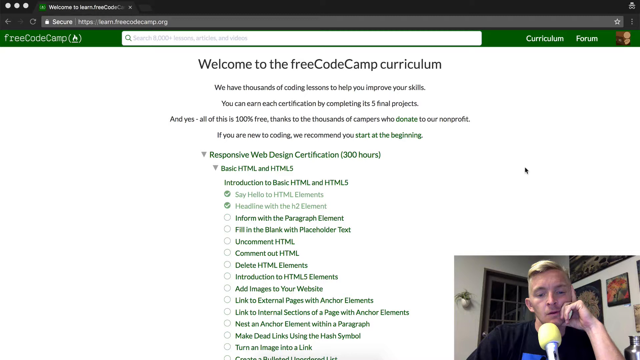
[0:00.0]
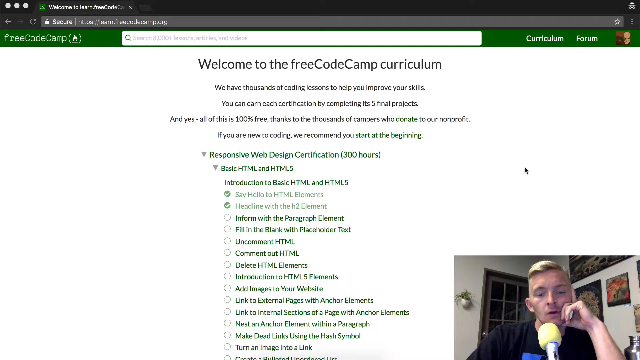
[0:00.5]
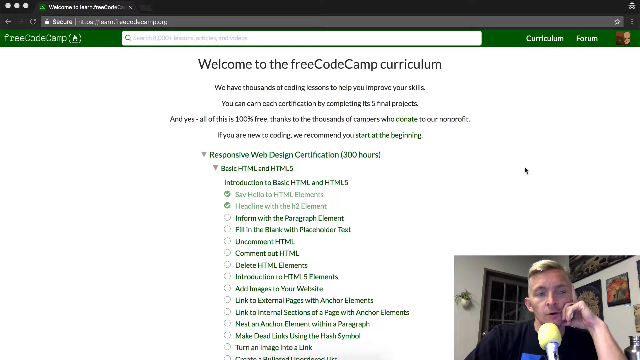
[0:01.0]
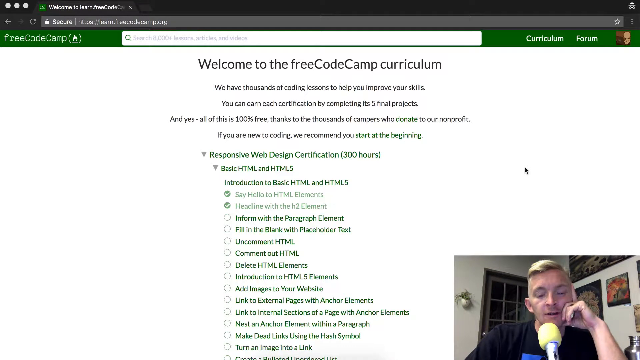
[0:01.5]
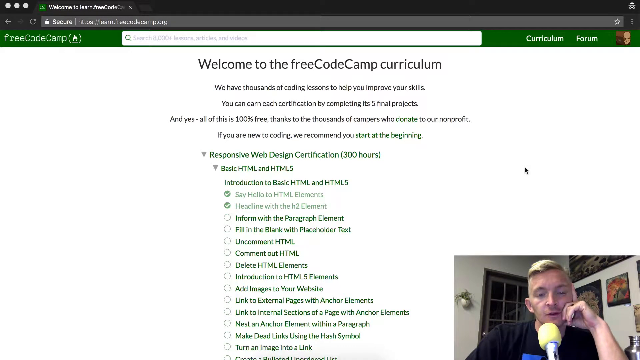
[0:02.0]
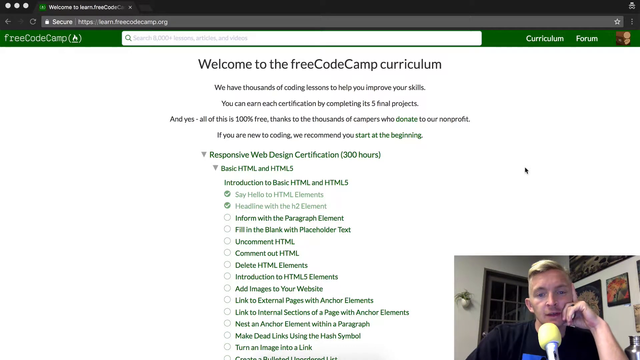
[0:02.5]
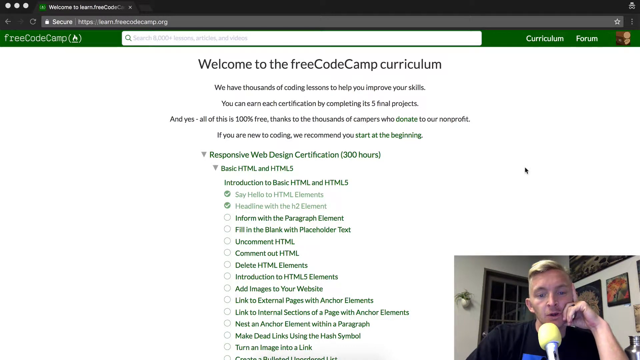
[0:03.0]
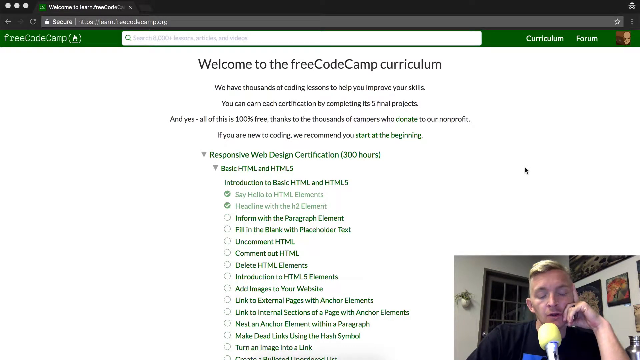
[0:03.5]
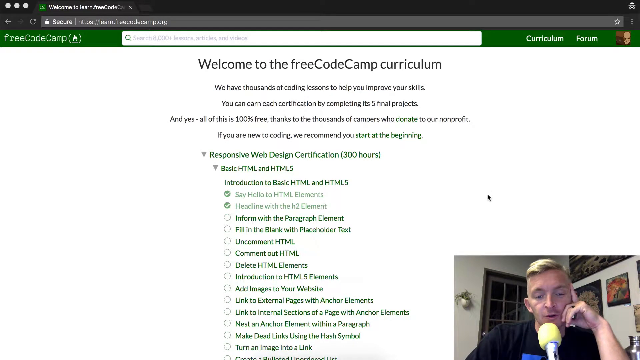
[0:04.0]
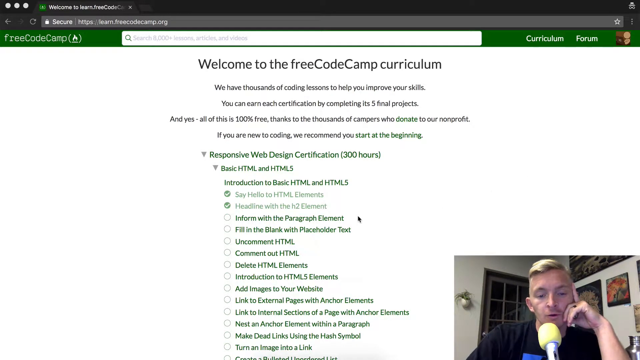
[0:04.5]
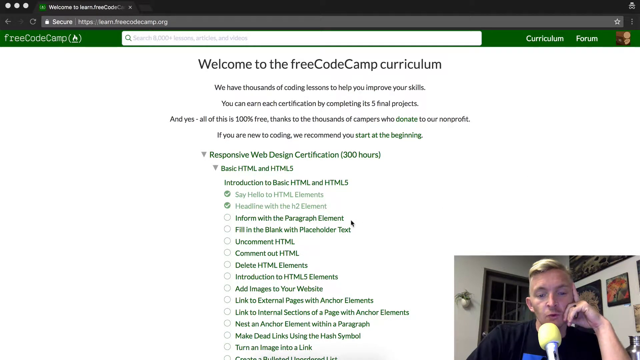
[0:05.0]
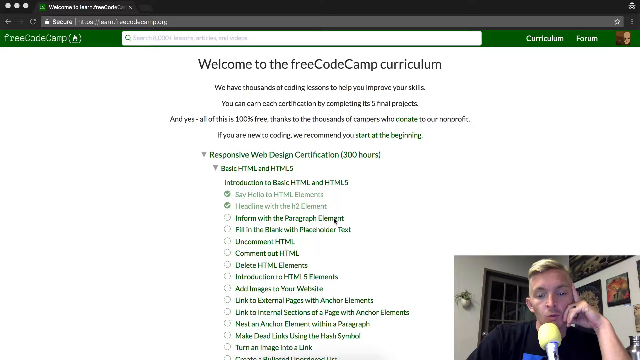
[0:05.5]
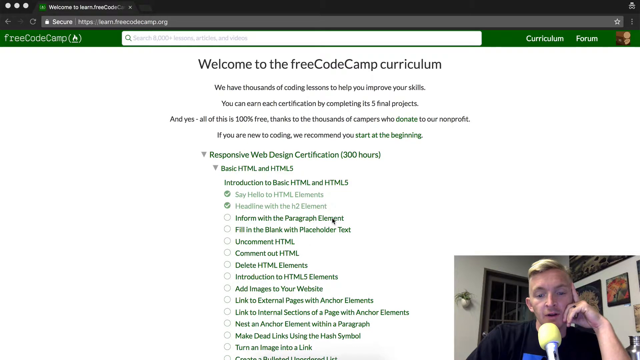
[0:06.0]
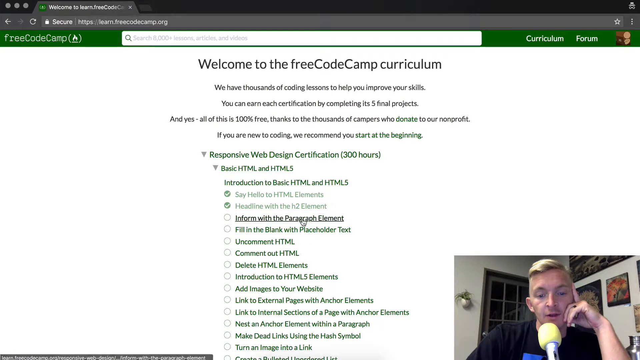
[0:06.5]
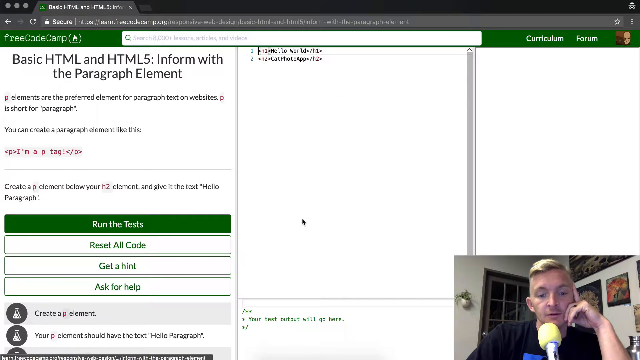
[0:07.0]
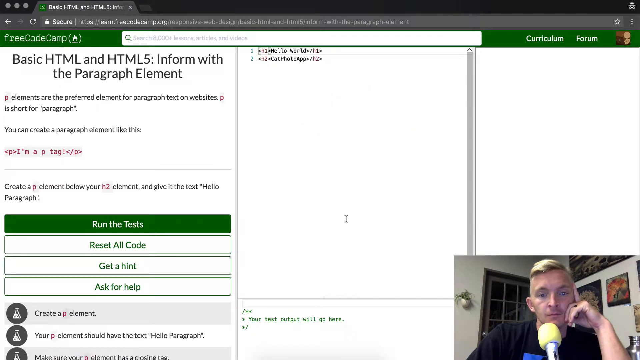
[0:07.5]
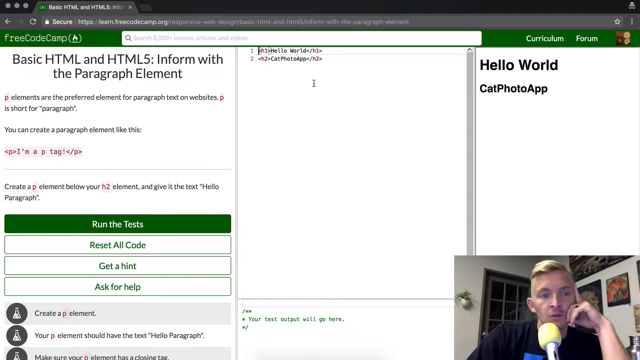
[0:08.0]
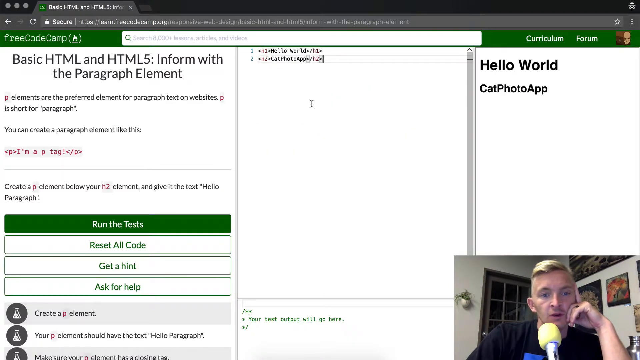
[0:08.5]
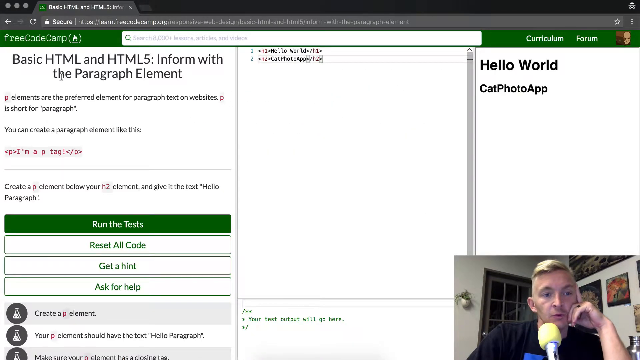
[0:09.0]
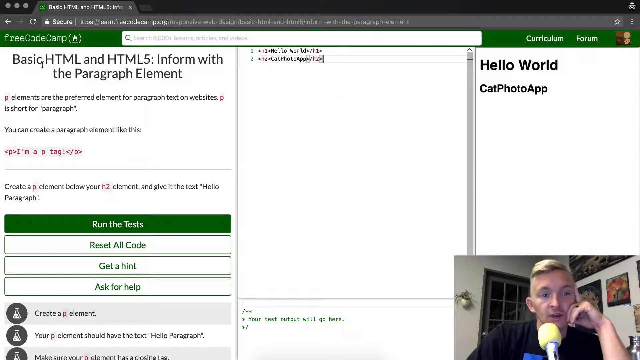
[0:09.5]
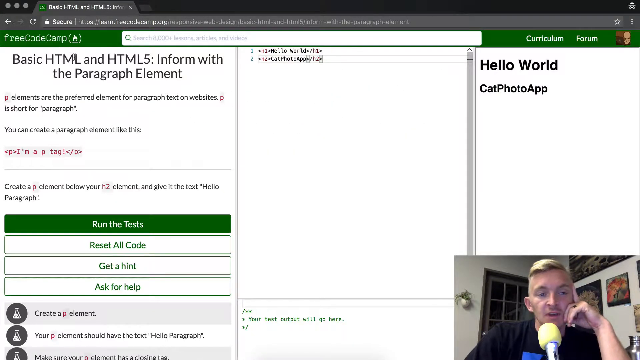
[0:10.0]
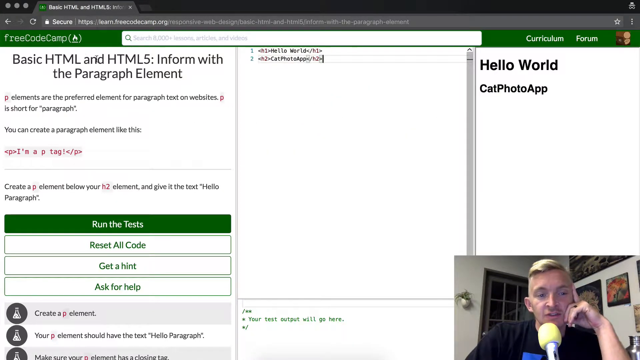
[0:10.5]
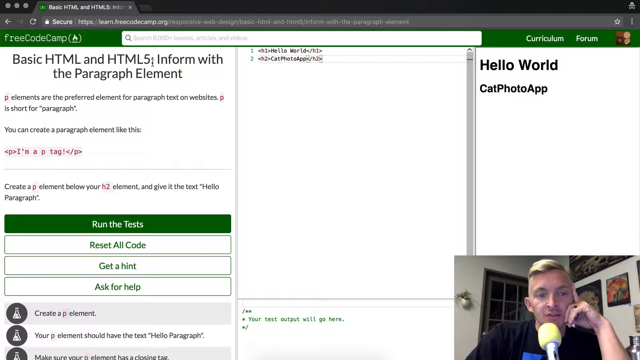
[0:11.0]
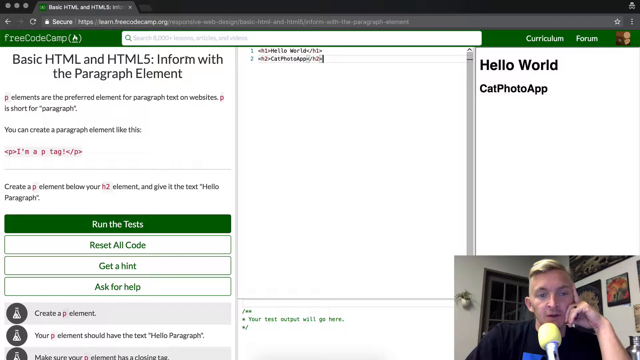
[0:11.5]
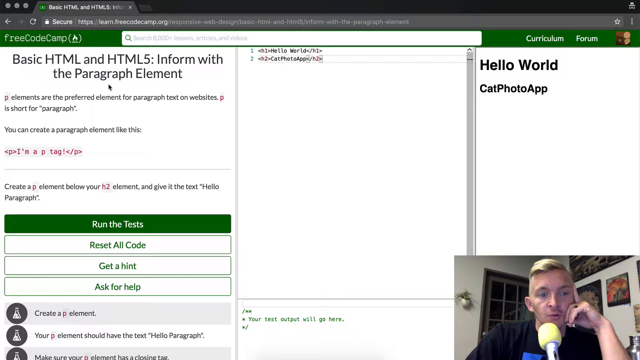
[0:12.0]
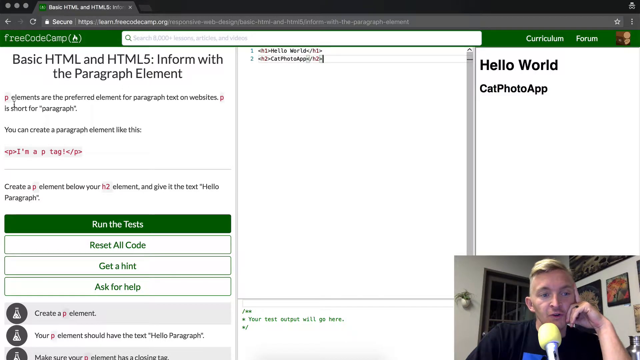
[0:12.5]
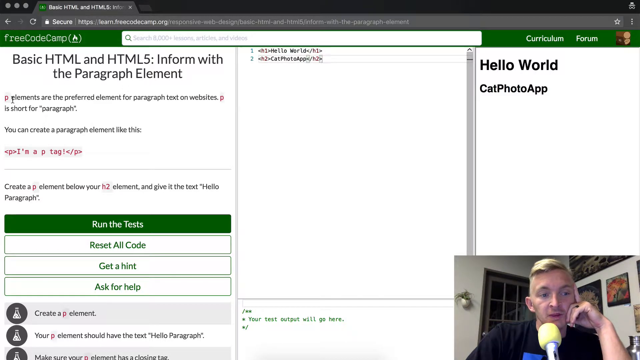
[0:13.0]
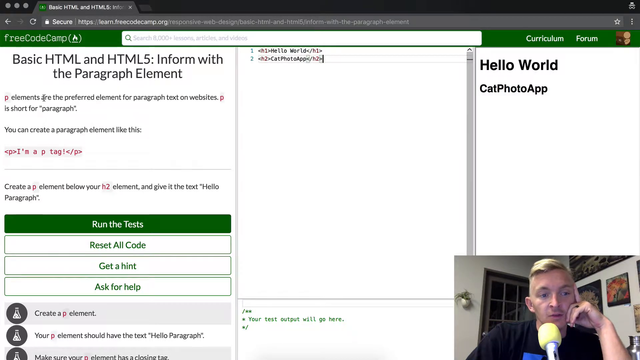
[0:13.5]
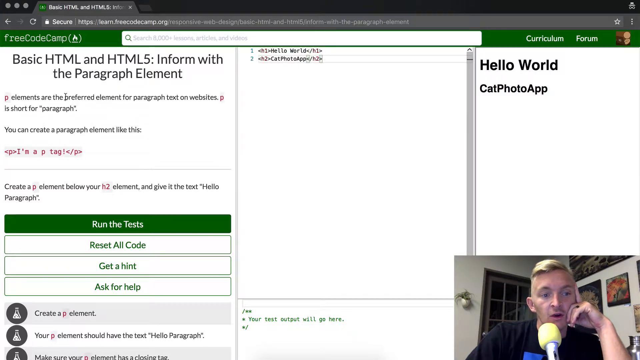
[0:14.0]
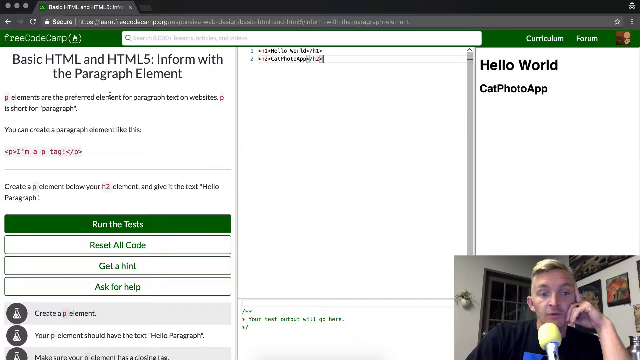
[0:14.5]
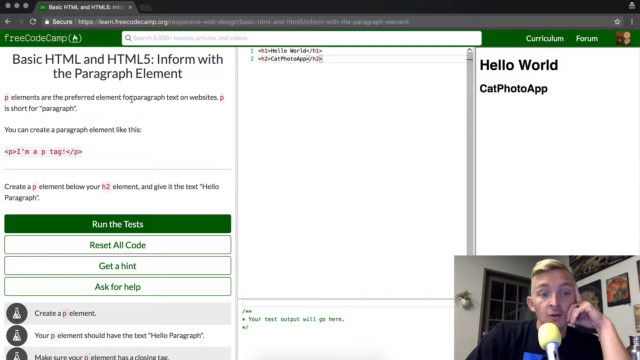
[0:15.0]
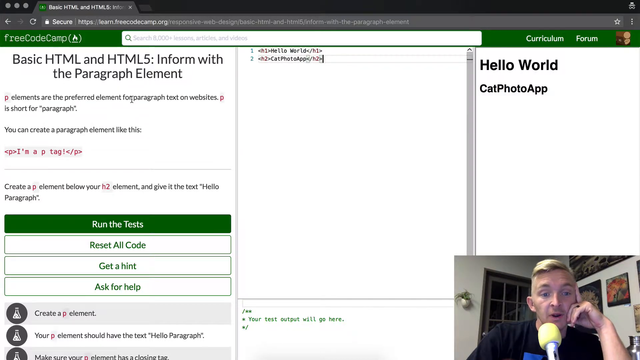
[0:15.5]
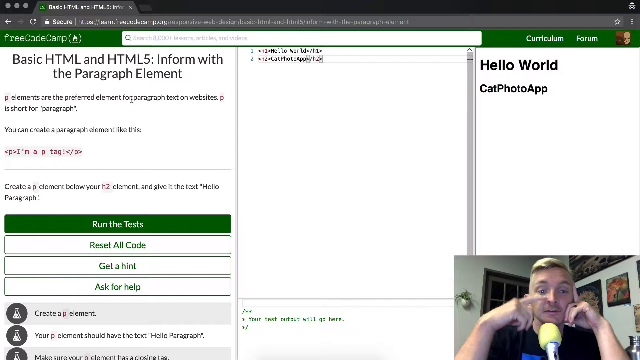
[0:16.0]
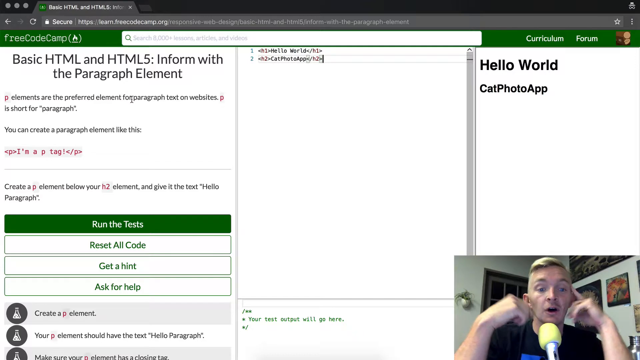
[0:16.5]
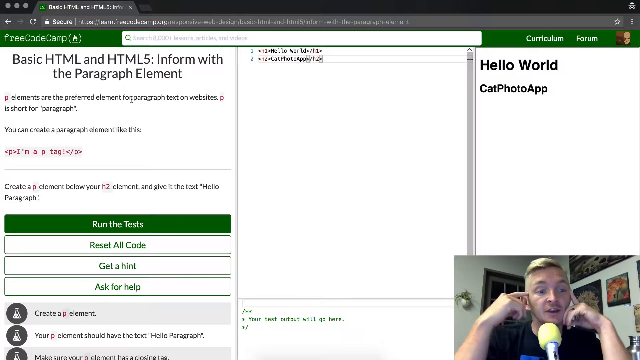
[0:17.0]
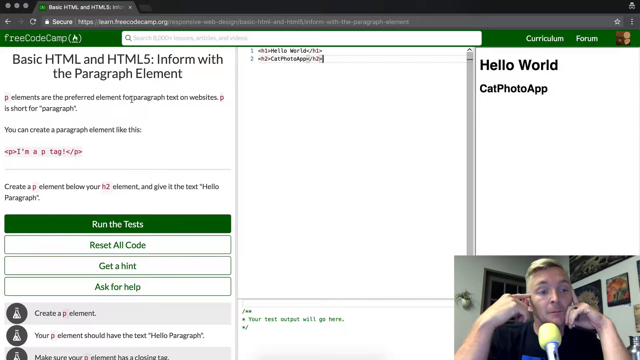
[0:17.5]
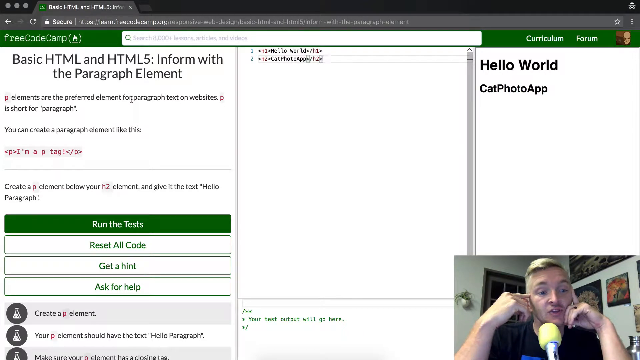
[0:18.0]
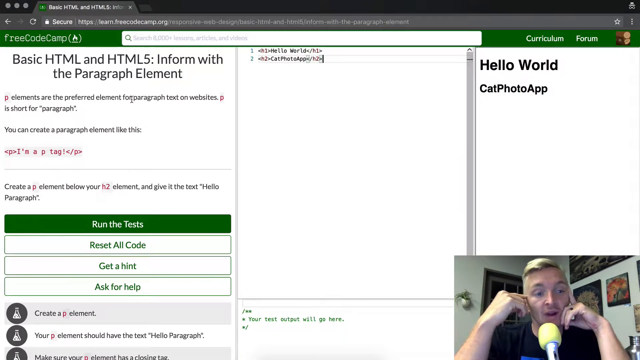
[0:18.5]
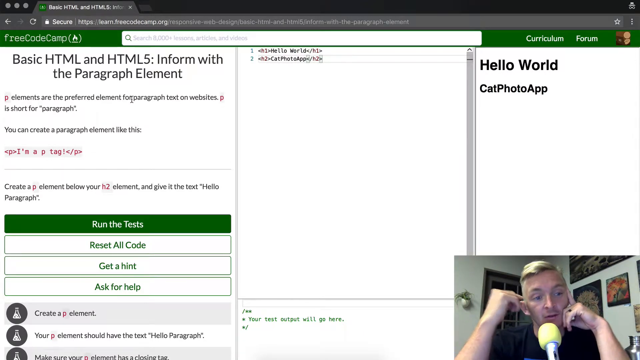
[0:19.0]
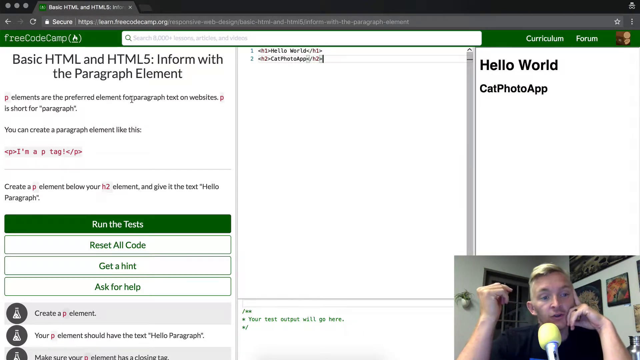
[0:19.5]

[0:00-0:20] A website is displayed on either a computer or a laptop. A white man is there talking, apparently about the page shown on the laptop. The page reads Free Code Camp, and it appears to offer lessons for free: text on it says "all of this is 100% free. Thanks to thousands of campers who donated to our non-profits." The page mentions five projects that need to be completed. Many courses are listed, such as a web design certification of 300 hours, with the hours of each subject or course written beside it.